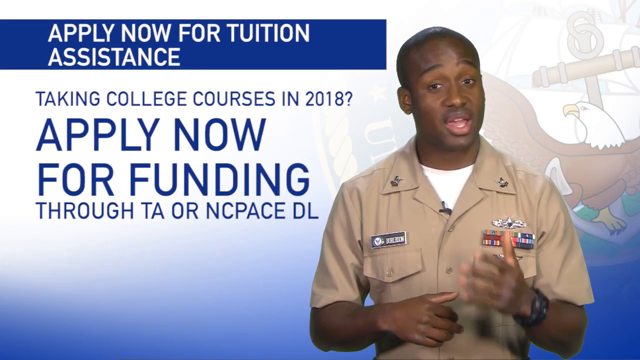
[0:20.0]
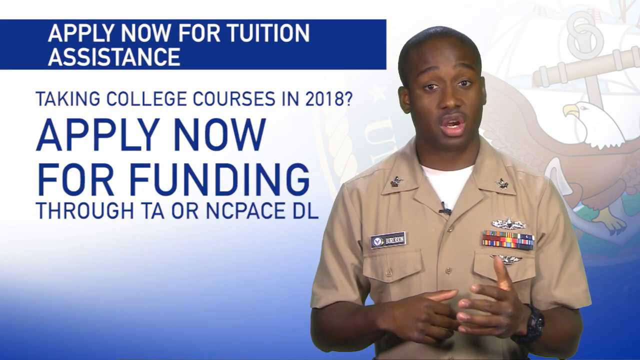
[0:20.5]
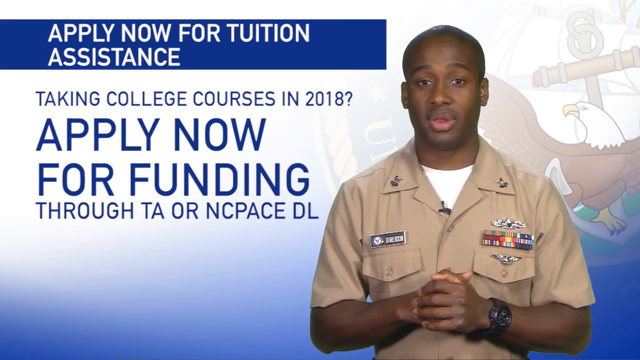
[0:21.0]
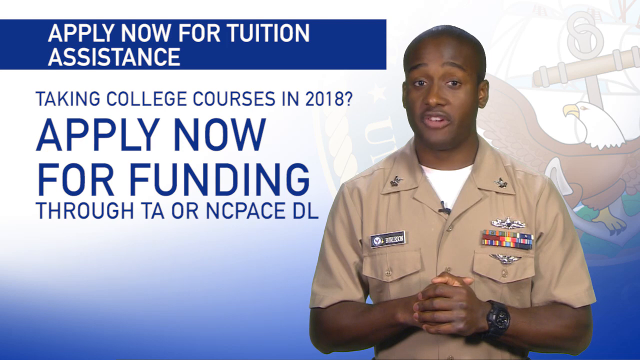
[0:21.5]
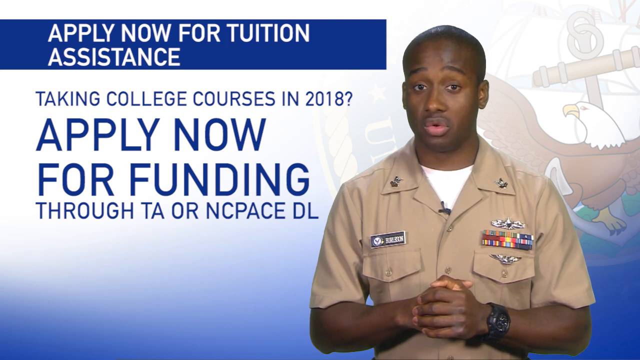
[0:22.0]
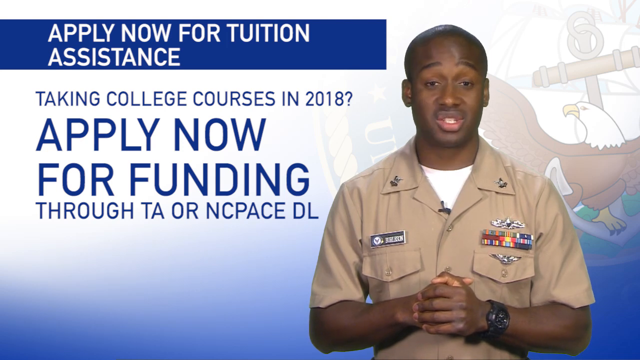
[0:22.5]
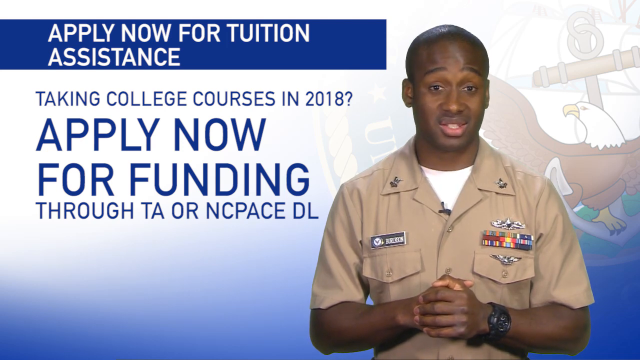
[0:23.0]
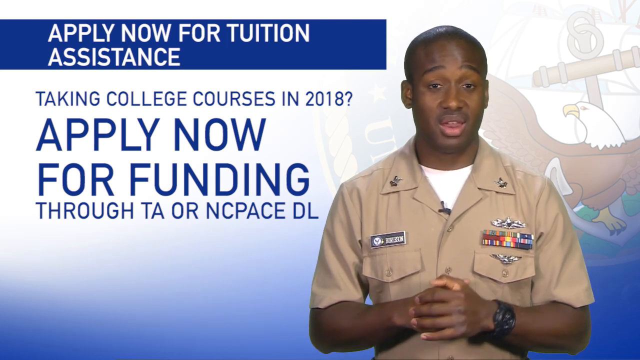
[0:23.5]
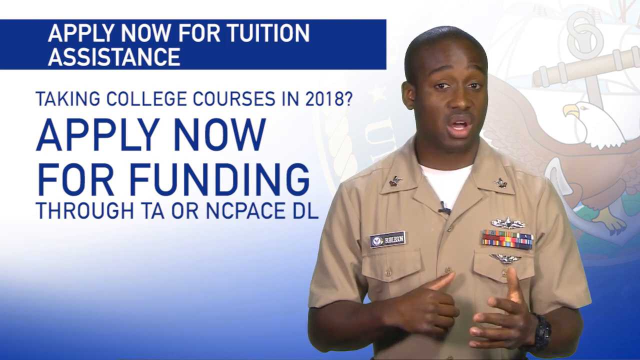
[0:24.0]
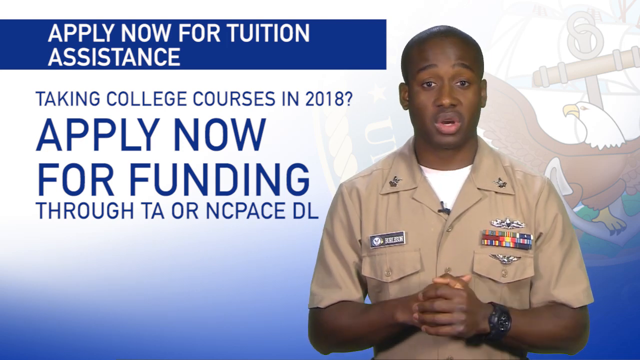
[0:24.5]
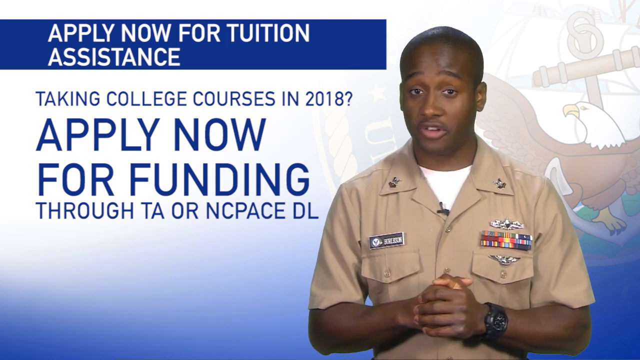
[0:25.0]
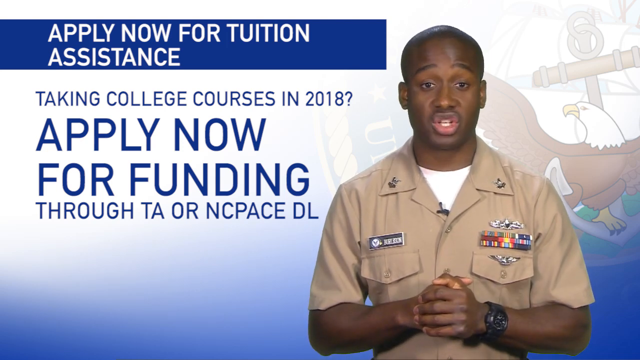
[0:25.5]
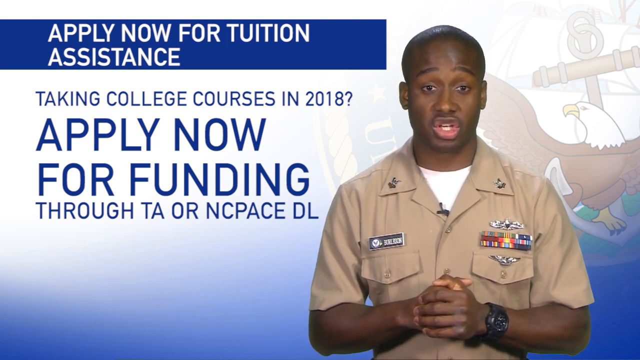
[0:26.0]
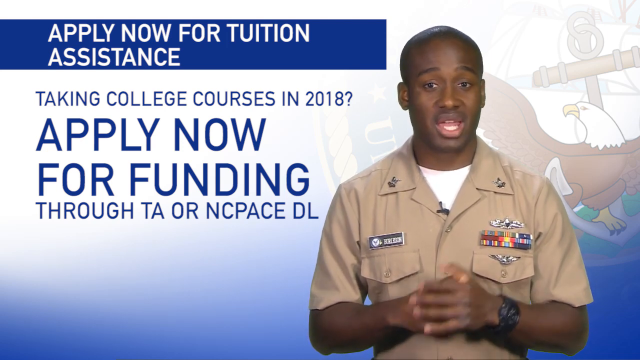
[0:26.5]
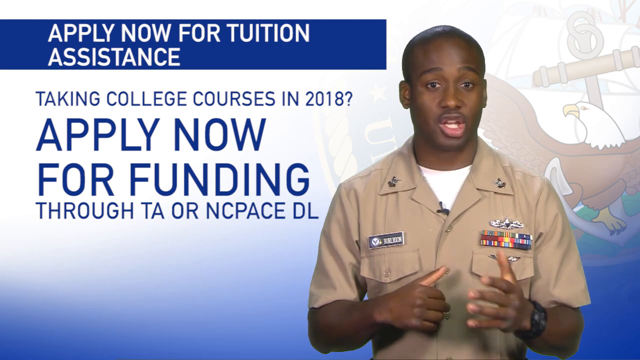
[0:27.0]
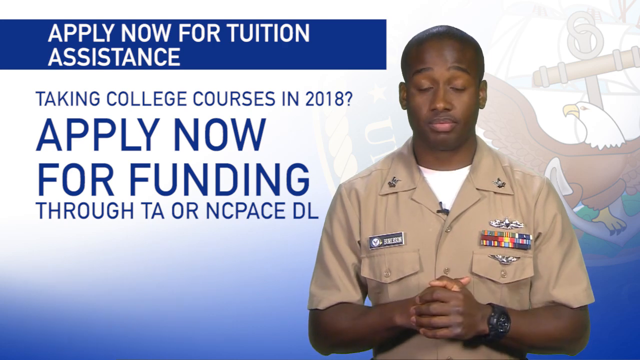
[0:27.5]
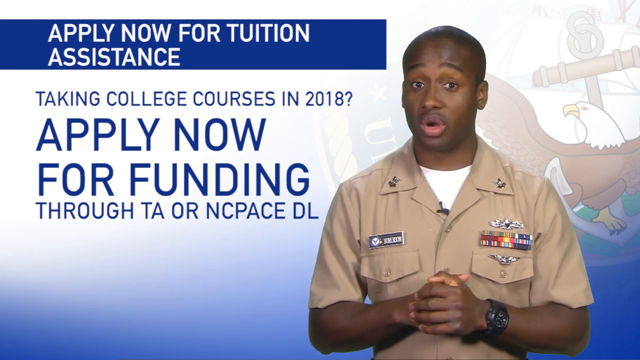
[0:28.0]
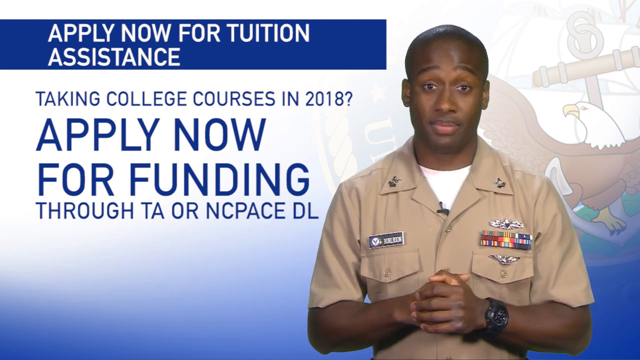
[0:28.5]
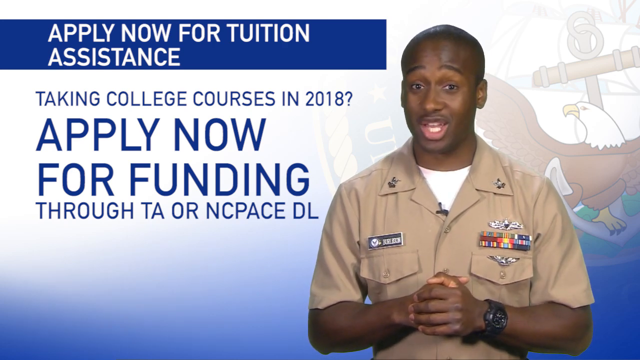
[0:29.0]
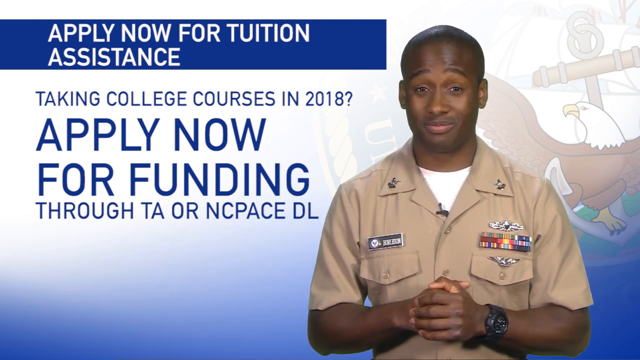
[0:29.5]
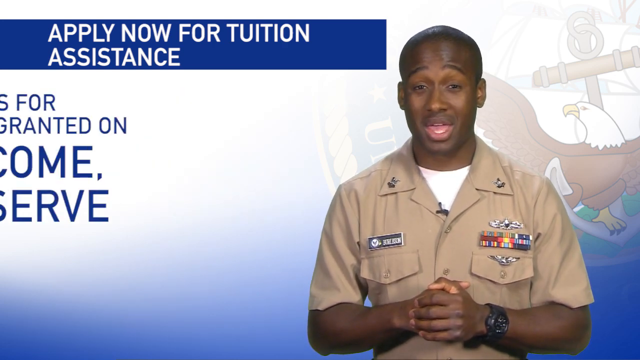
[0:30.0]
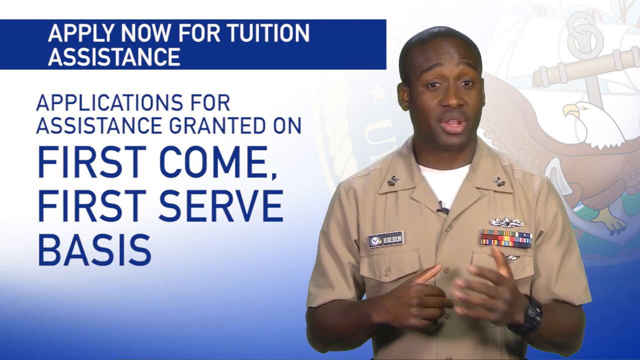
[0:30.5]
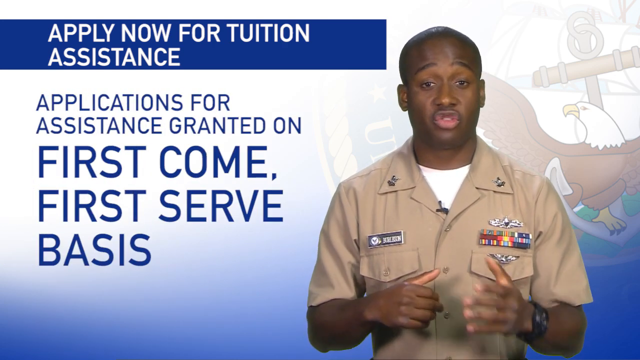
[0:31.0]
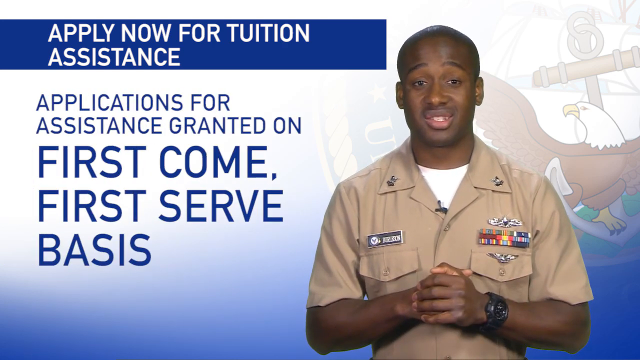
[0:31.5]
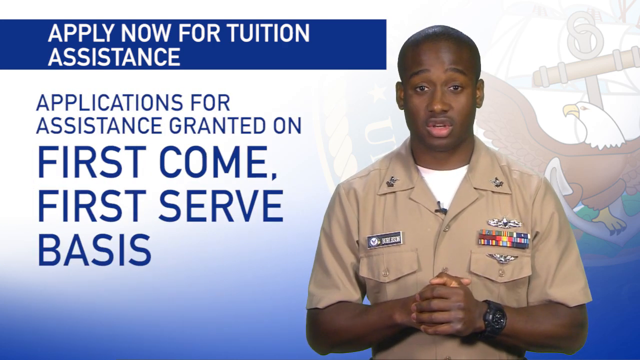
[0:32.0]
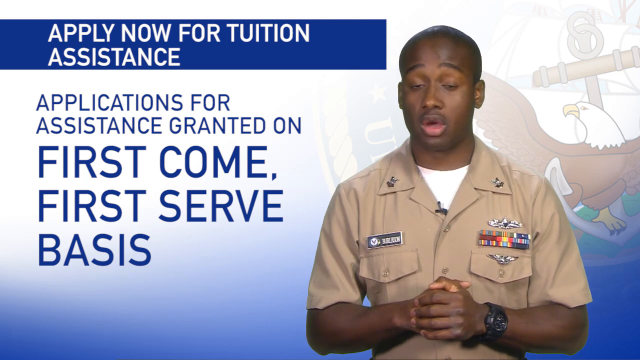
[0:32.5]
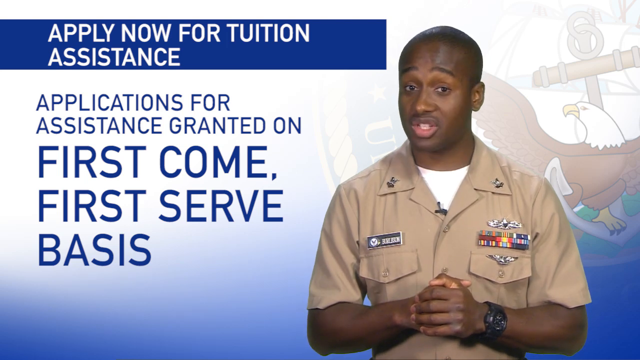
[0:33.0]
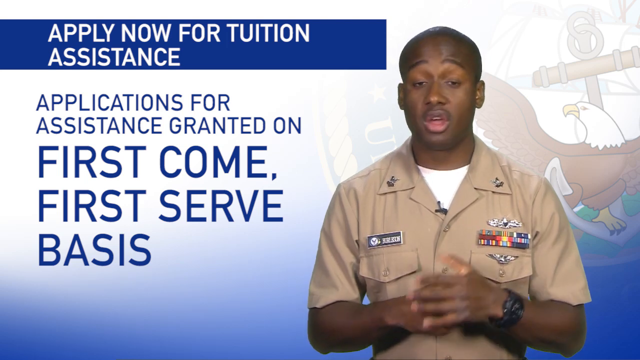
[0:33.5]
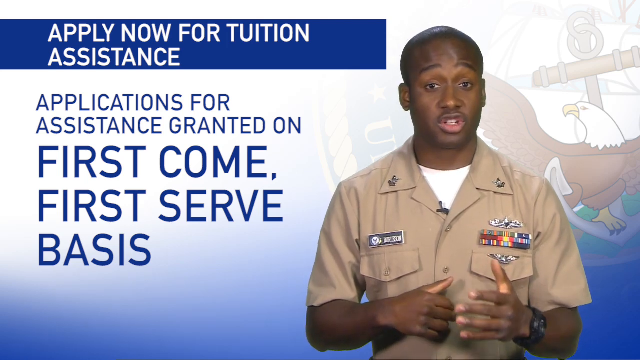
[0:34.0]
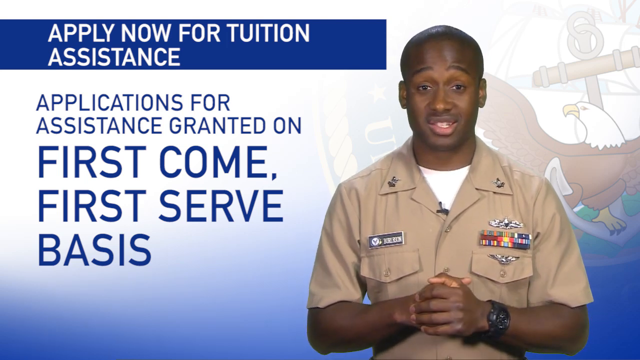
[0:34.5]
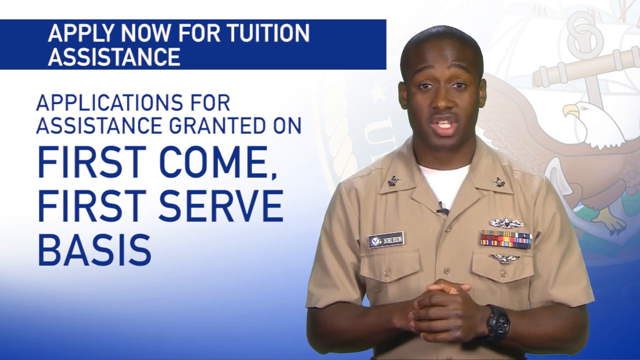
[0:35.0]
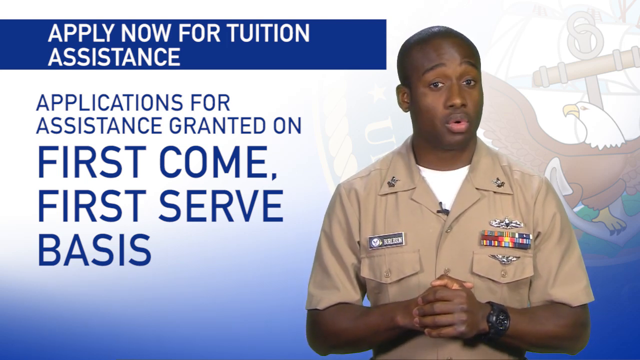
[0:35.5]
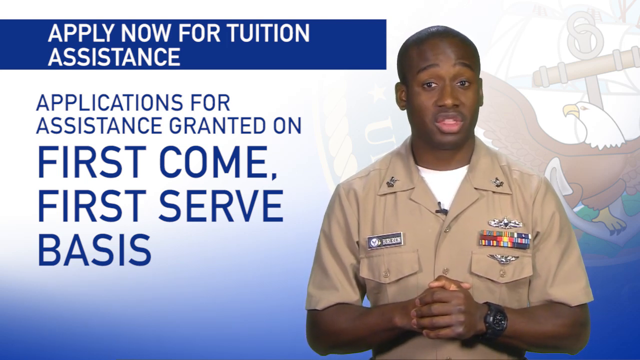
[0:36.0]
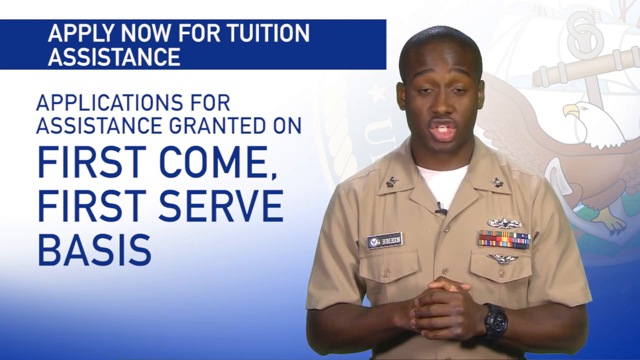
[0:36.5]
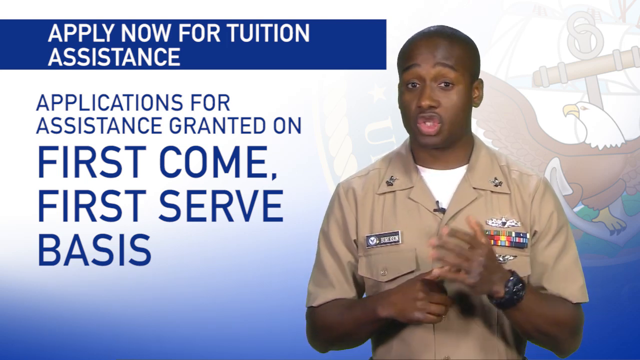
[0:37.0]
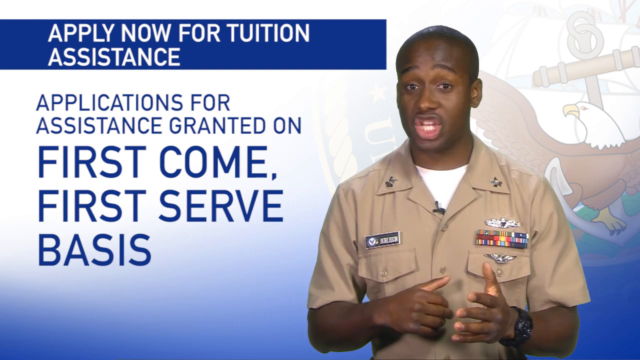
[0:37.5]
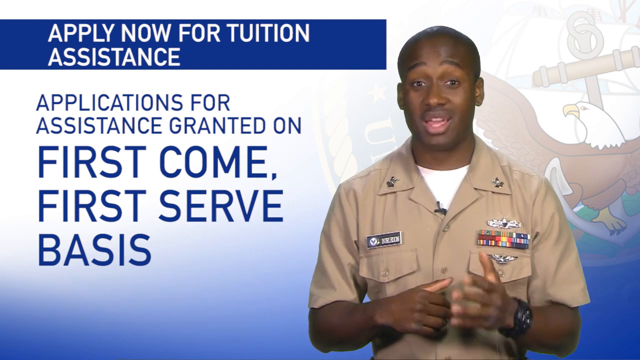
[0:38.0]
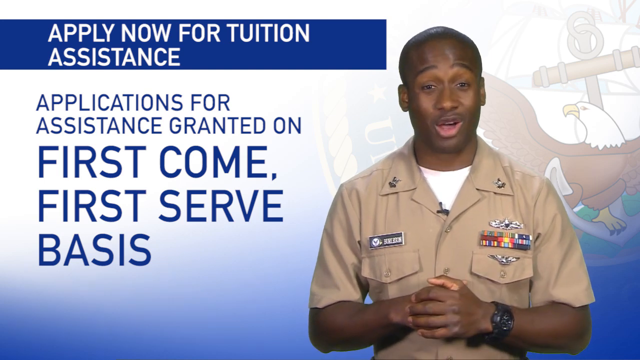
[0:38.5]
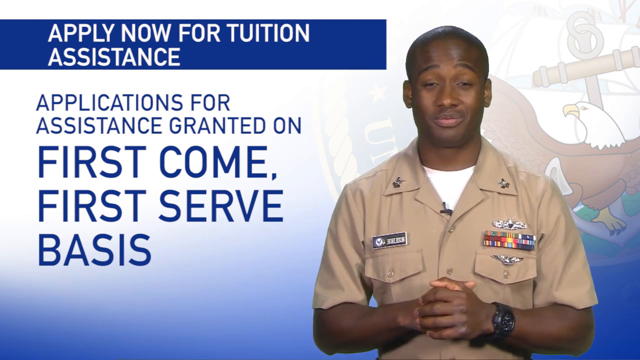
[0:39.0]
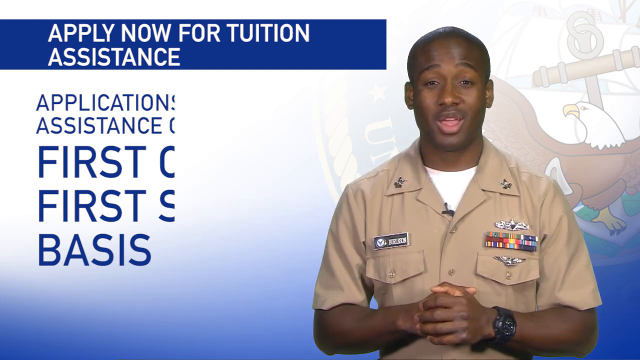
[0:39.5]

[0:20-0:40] The man keeps talking, gesturing with his head and his hand; he brings his hands together, clenches his fist, then points. Text on the left side then reads "Applications for assistance granted on first come, first served basis." A small mic is visible on his military shirt, along with the V-neck of the t-shirt. He has short hair and is seen only from the head to the waist. The background is solid apart from the text appearing on the left.